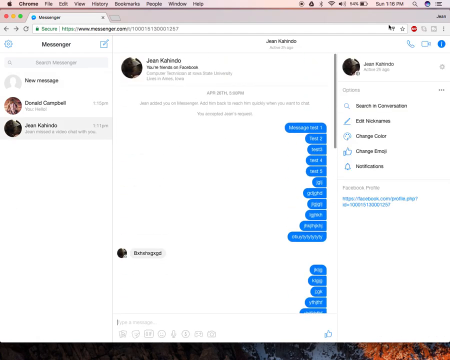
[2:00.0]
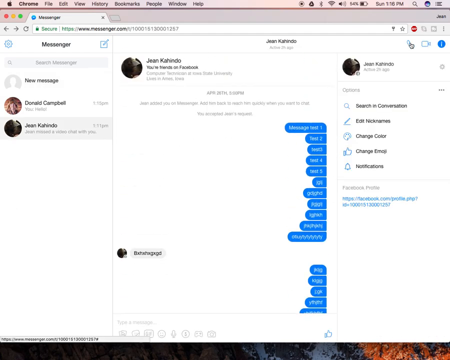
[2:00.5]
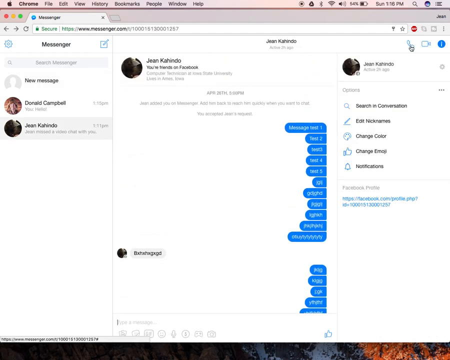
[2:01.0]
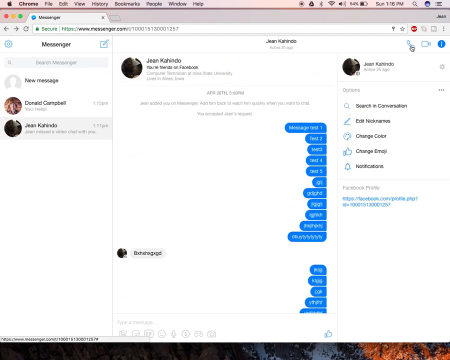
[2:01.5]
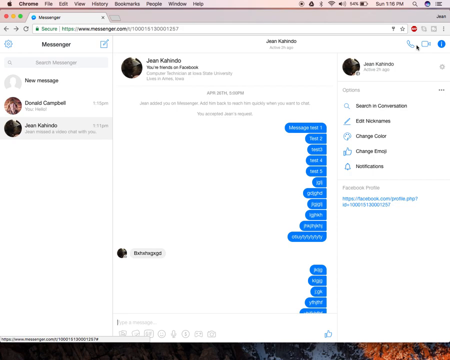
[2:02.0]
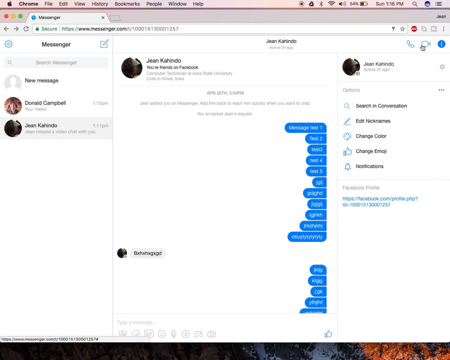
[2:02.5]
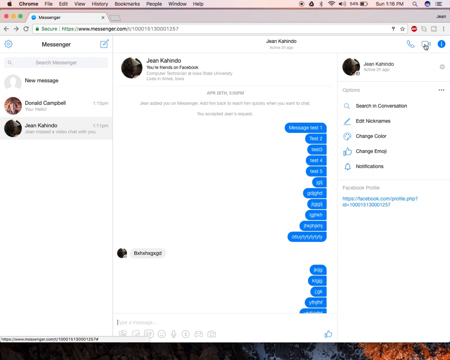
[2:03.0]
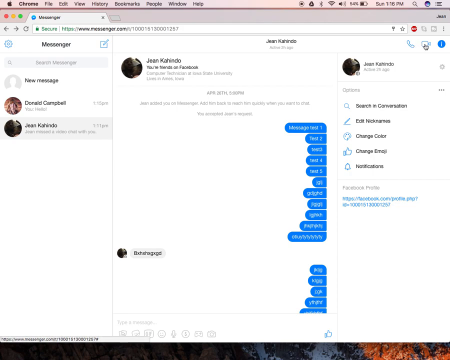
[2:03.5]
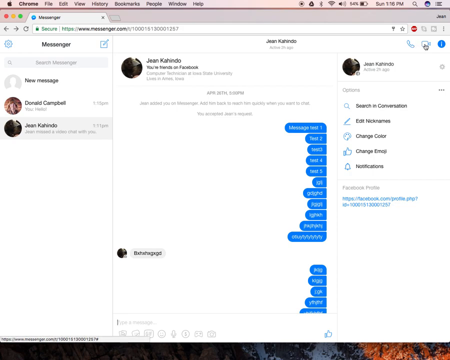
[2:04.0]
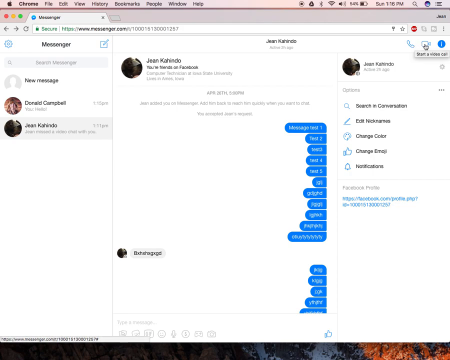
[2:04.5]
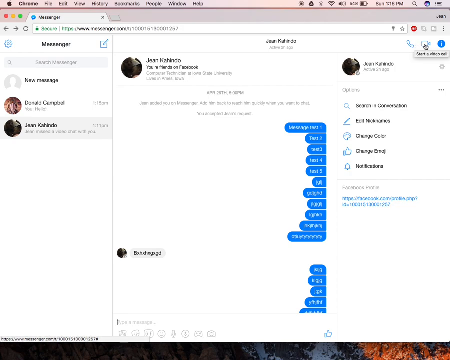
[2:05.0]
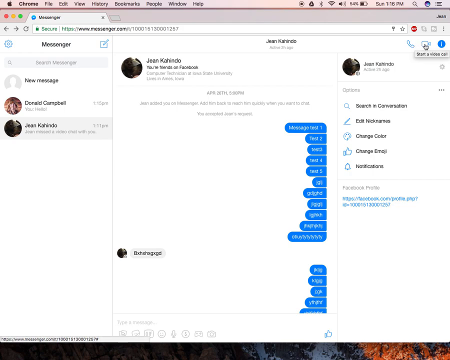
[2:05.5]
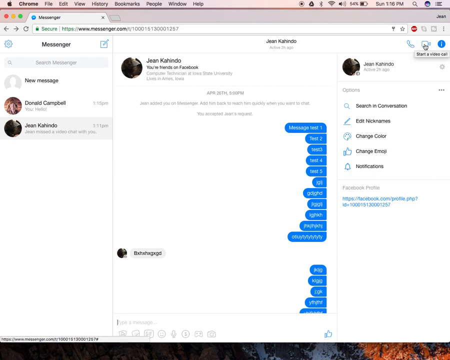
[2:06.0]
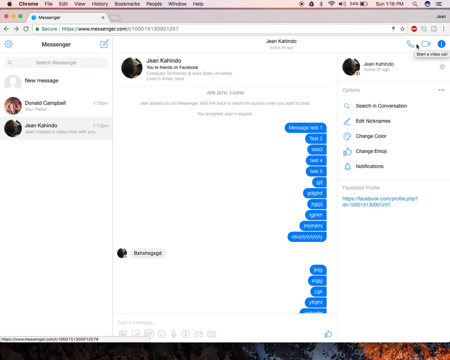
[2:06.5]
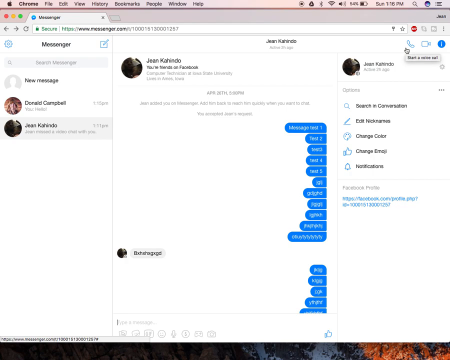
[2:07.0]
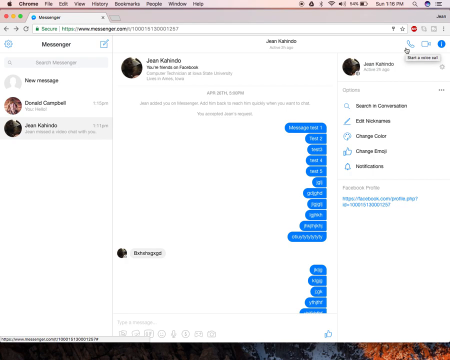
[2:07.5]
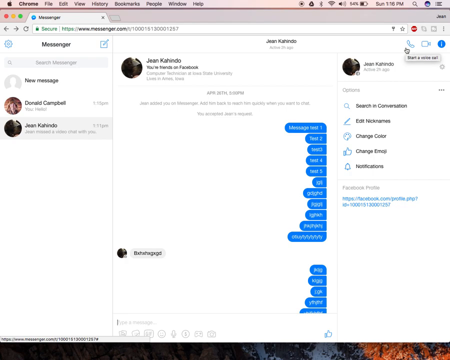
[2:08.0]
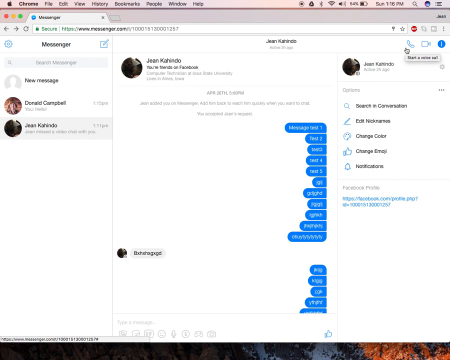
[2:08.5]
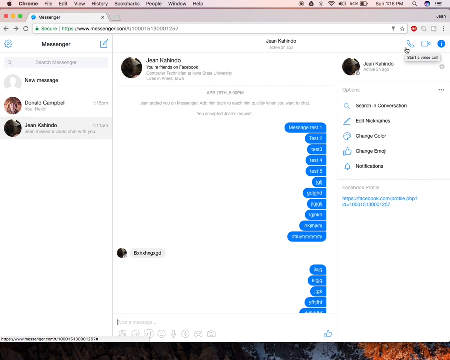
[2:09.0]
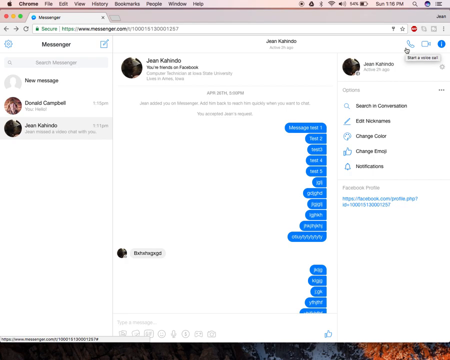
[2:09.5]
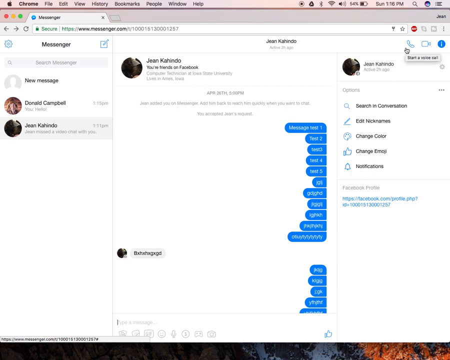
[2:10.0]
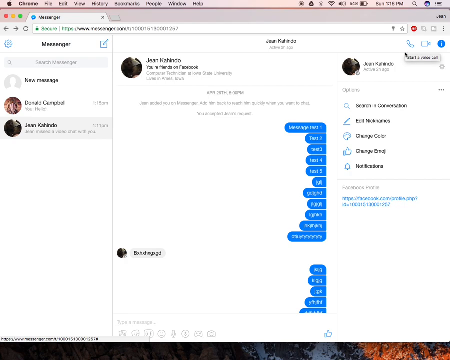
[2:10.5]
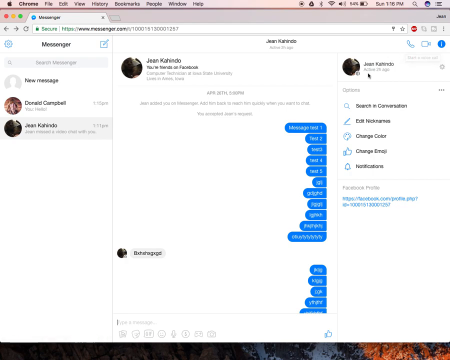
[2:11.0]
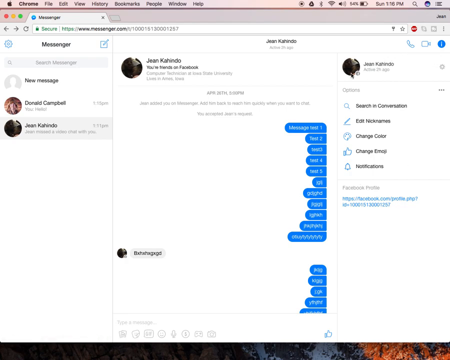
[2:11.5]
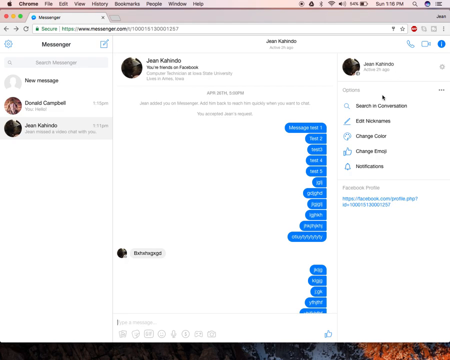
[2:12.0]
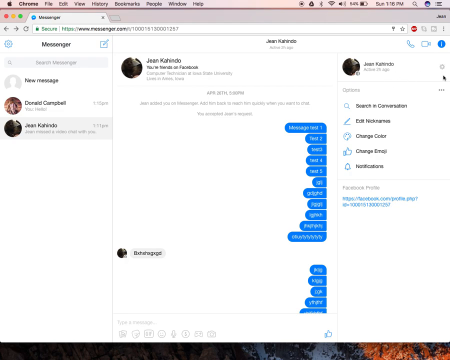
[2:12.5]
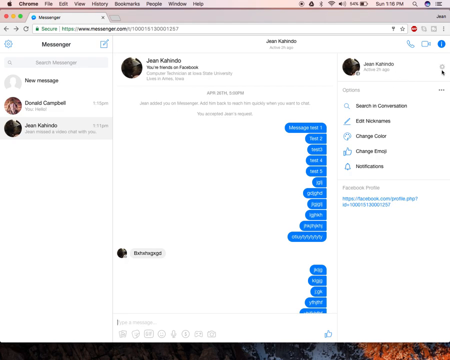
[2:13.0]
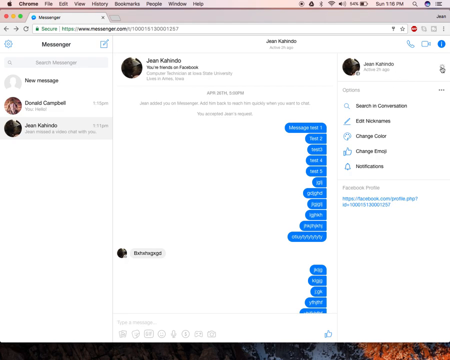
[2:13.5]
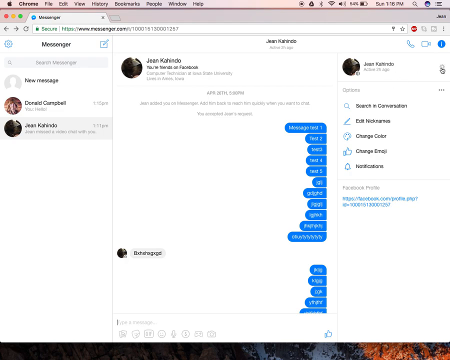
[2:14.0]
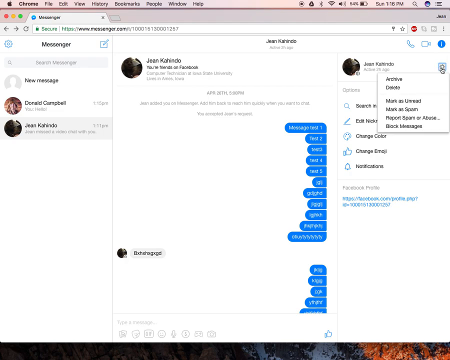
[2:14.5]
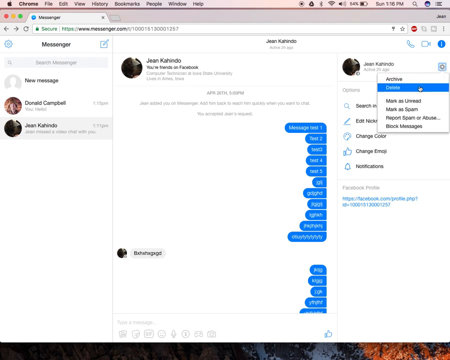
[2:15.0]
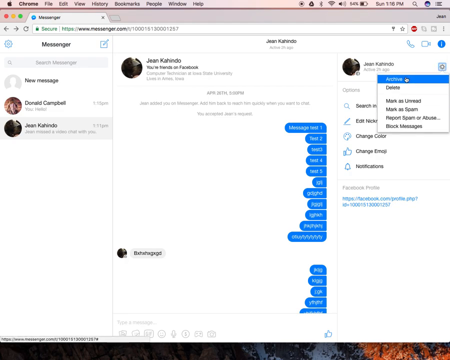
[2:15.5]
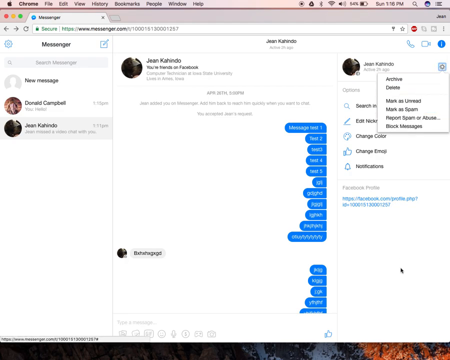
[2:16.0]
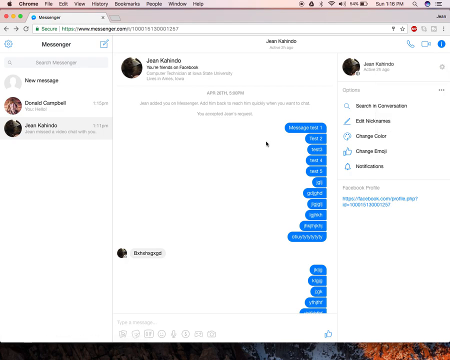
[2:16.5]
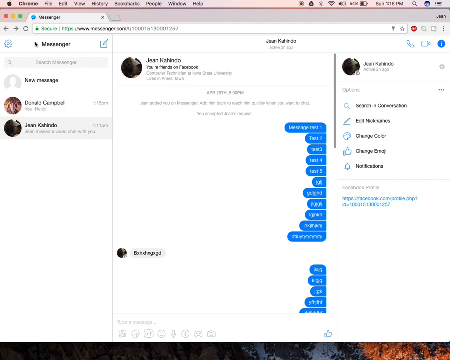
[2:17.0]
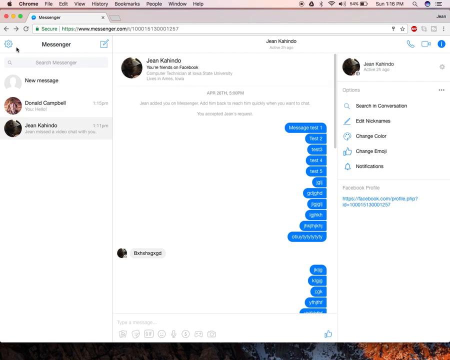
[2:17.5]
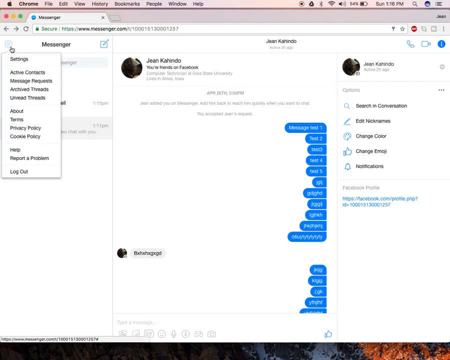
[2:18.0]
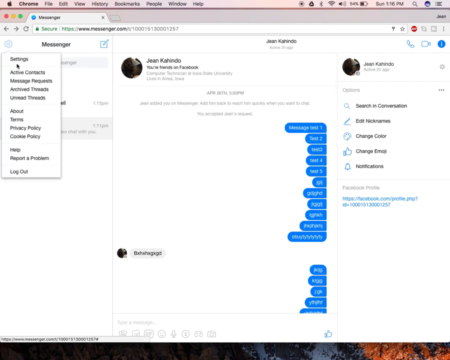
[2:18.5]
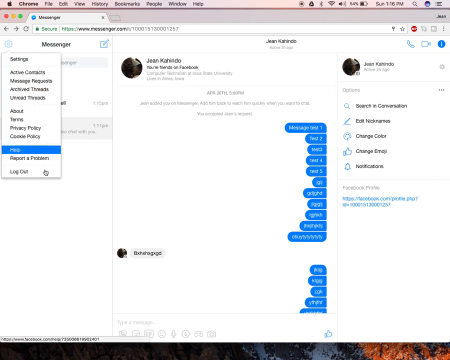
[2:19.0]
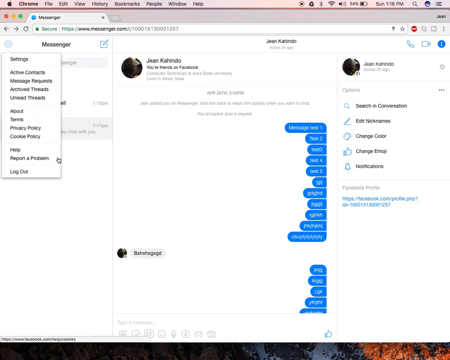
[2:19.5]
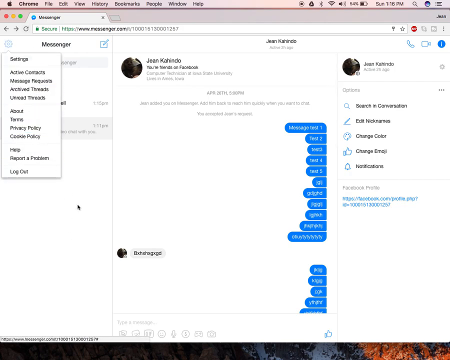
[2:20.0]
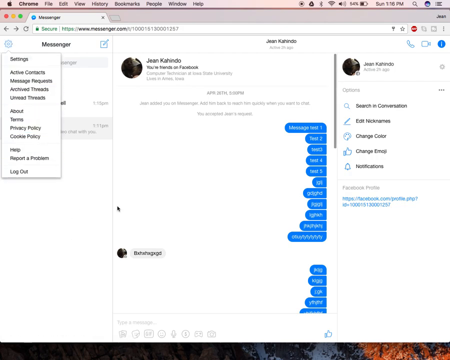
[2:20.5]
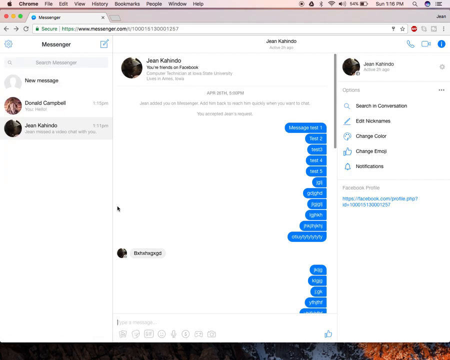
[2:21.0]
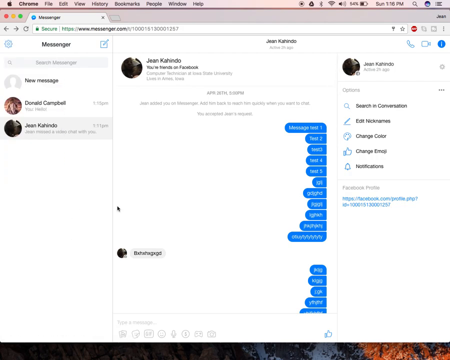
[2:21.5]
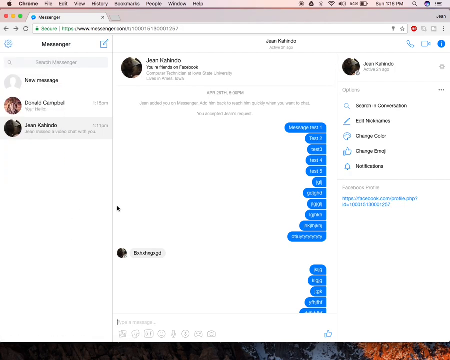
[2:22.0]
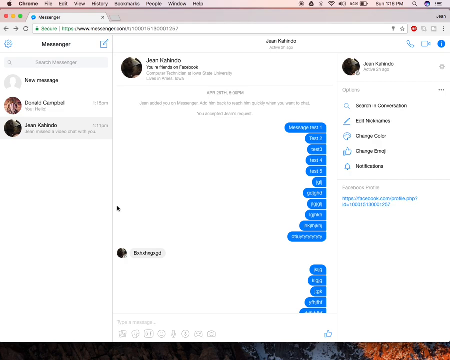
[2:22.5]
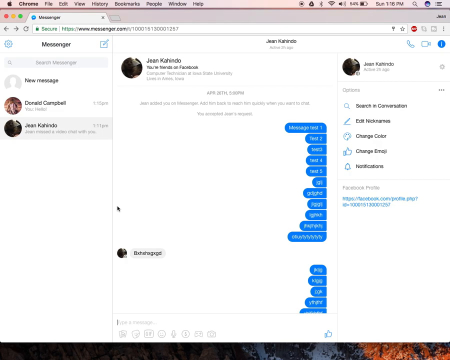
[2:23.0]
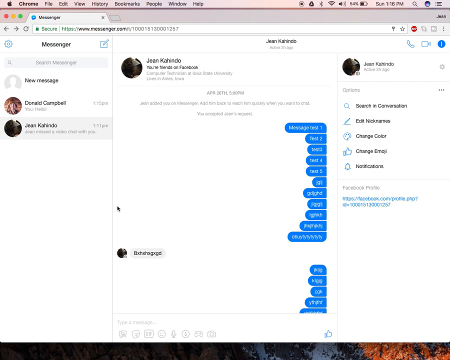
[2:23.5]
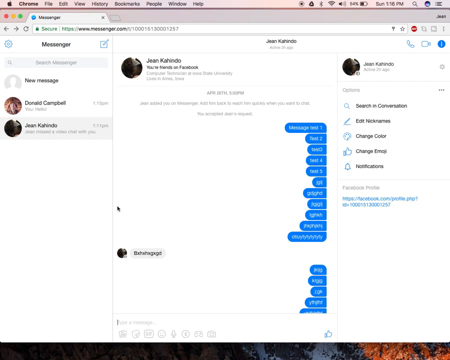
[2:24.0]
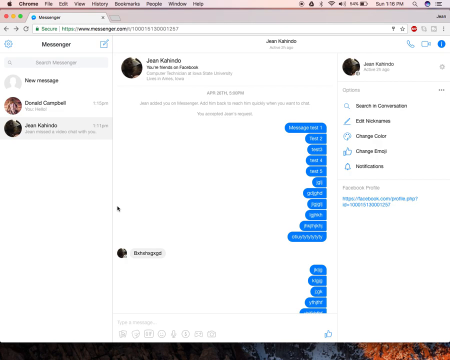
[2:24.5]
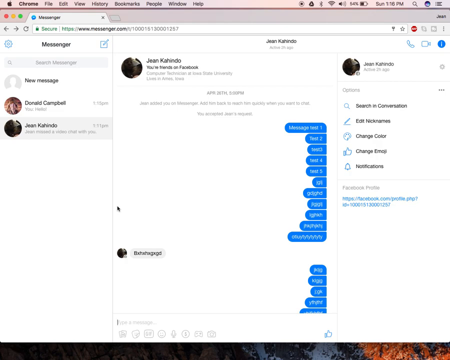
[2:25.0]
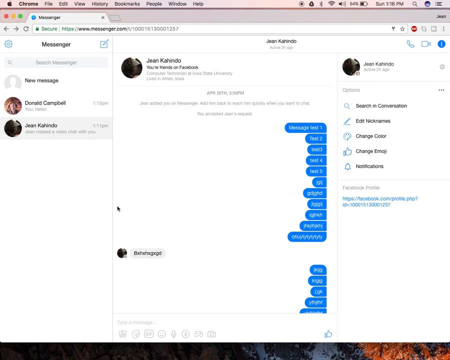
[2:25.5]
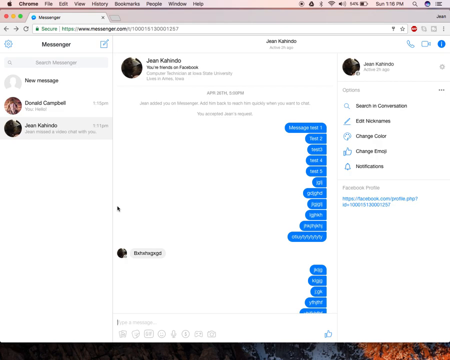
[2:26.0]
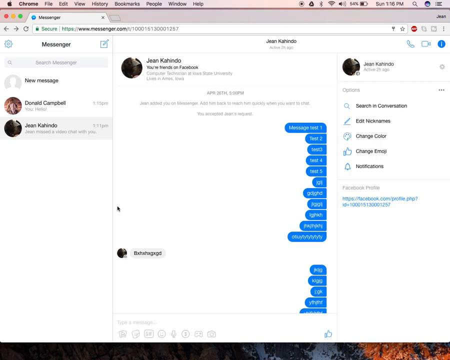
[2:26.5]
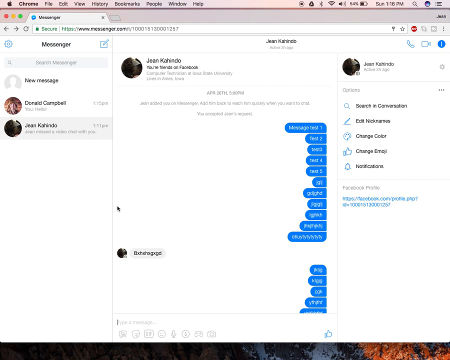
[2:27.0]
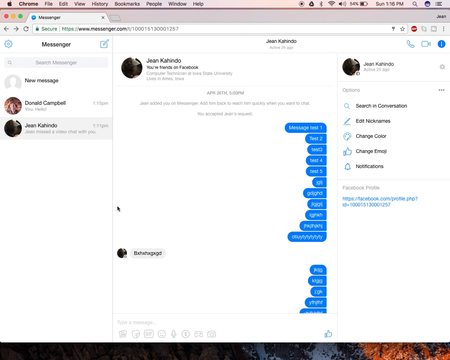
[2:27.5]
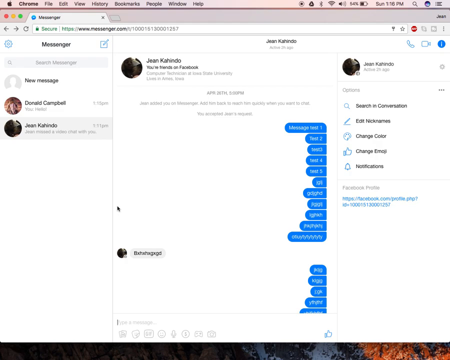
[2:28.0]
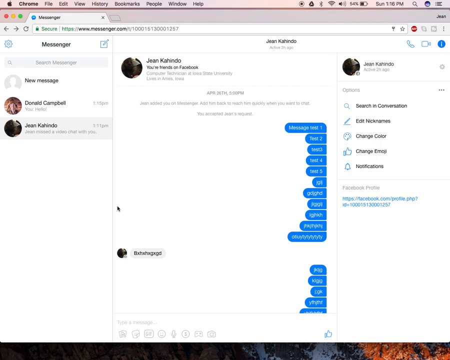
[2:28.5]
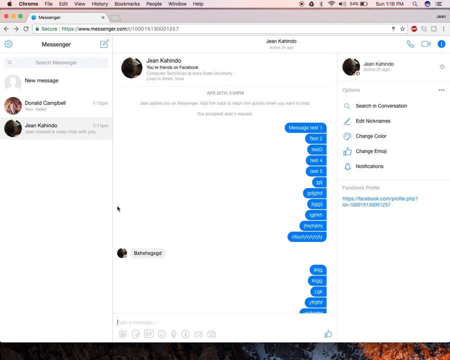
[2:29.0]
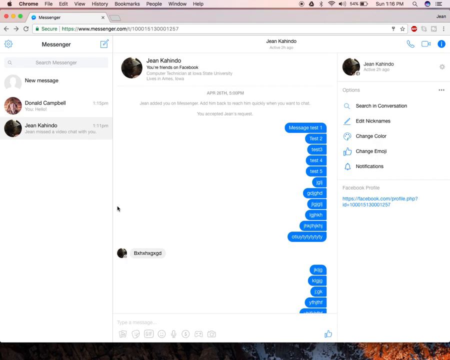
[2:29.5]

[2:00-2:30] A conversation with Jean kahindo shows video call and voice call options. The conversation menu offers archive, delete, mark as read, mark as spam, report spam or abuse, and block messages. A settings section lists archived contacts, message requests, active contacts, about, terms, privacy policy, cookies policy, help, report a problem and log out.